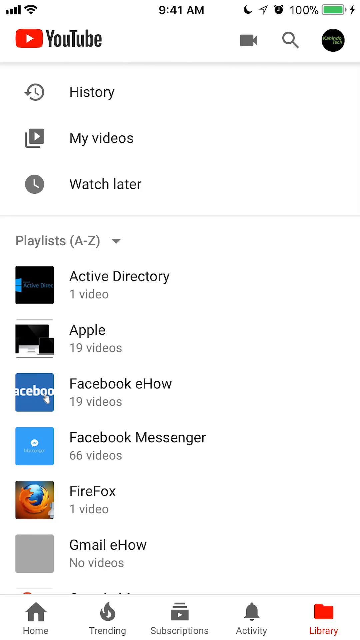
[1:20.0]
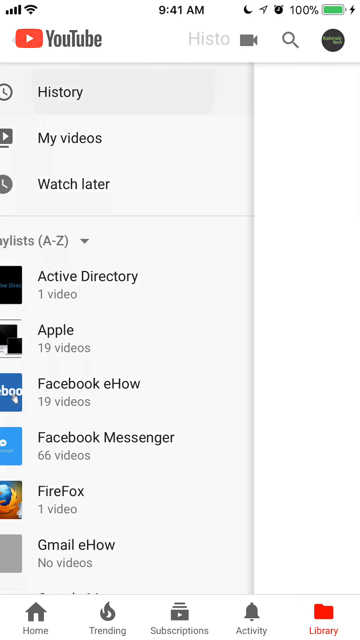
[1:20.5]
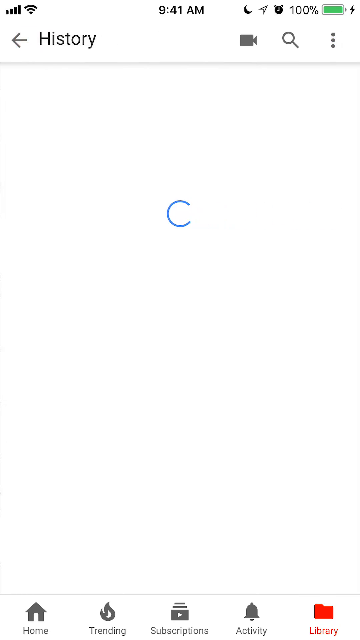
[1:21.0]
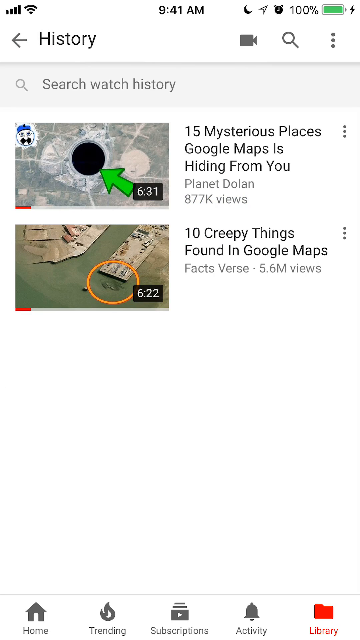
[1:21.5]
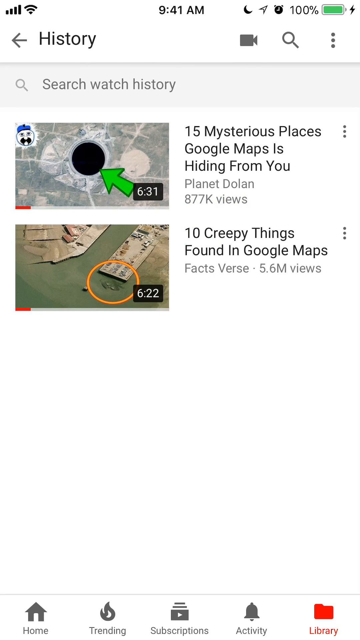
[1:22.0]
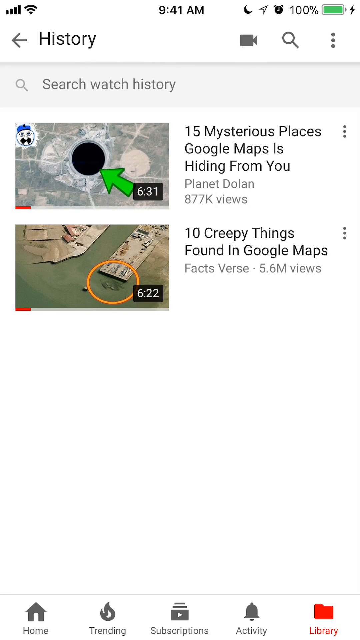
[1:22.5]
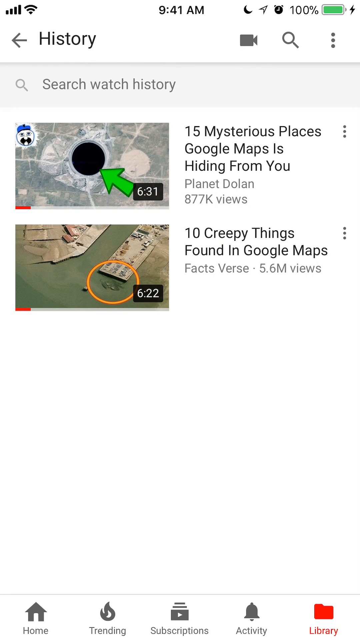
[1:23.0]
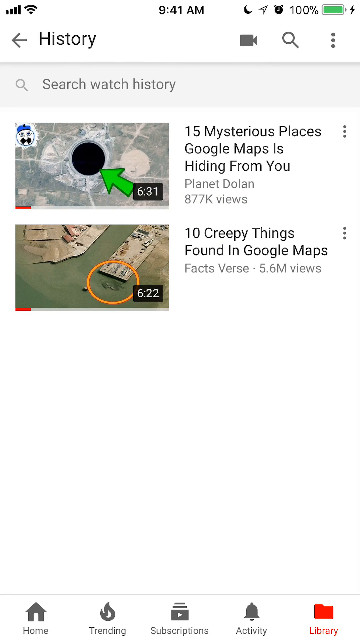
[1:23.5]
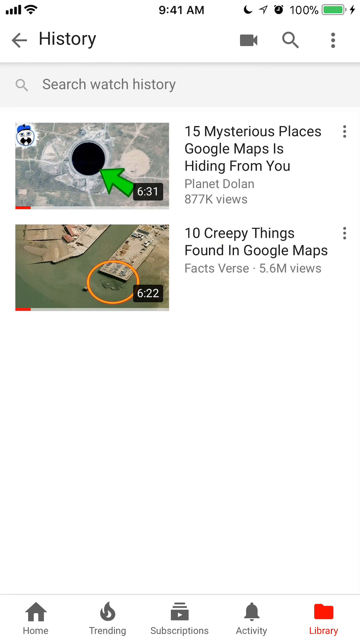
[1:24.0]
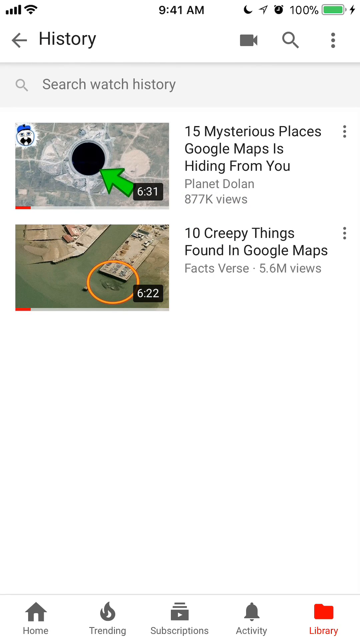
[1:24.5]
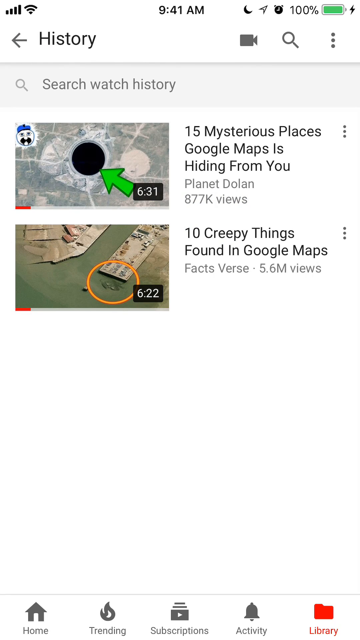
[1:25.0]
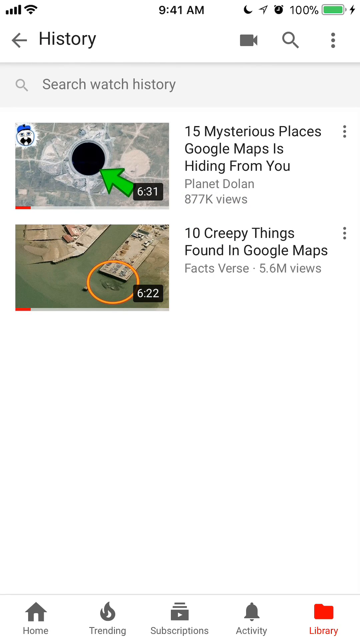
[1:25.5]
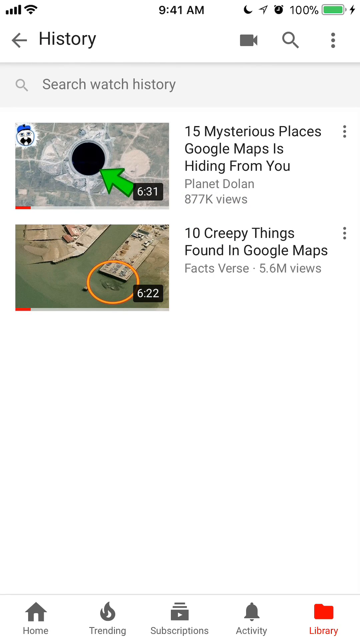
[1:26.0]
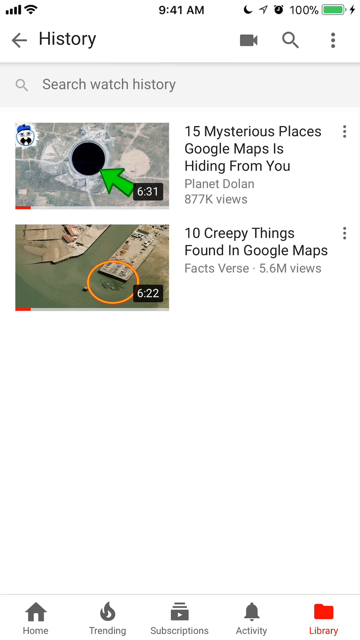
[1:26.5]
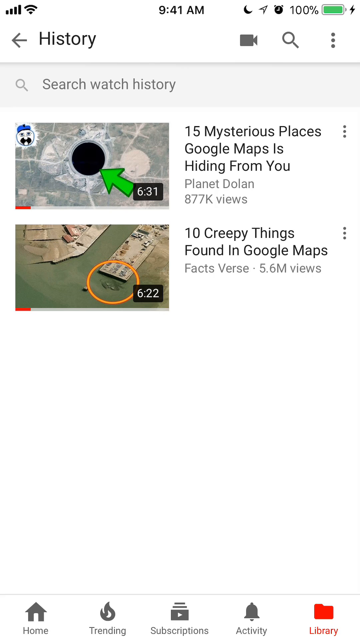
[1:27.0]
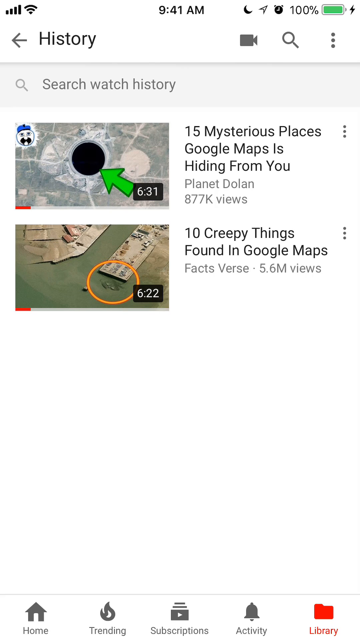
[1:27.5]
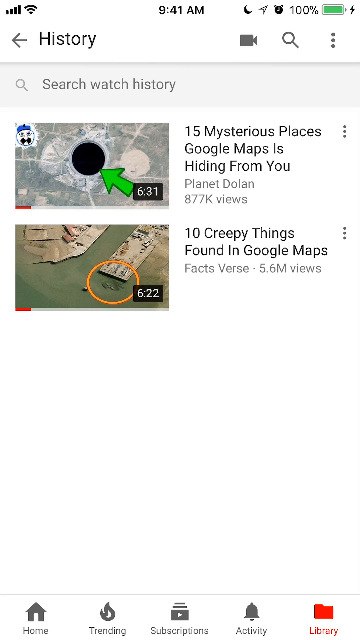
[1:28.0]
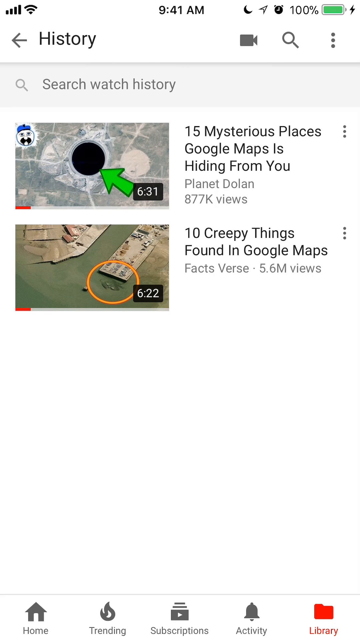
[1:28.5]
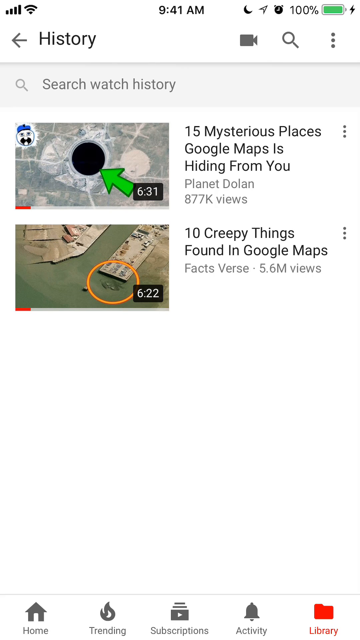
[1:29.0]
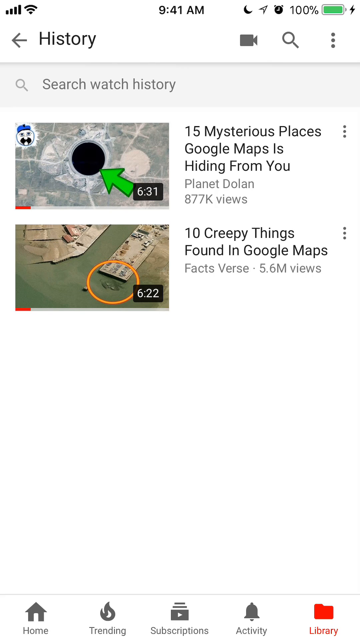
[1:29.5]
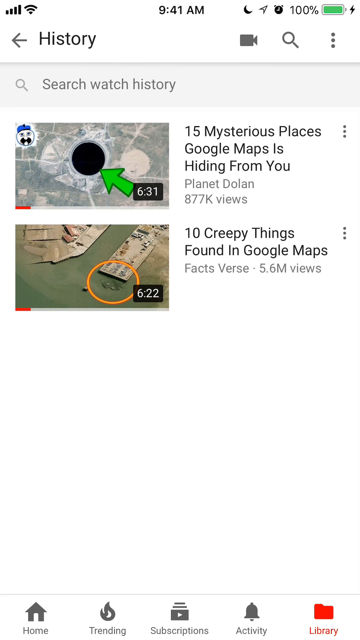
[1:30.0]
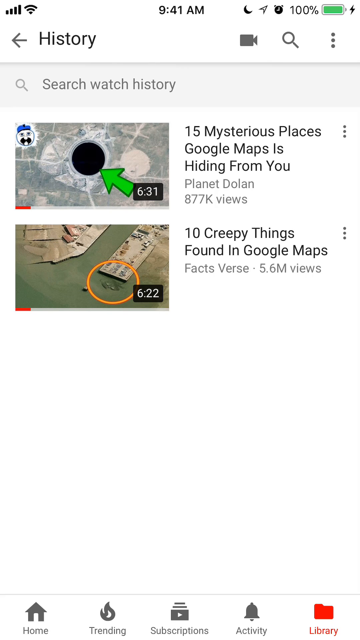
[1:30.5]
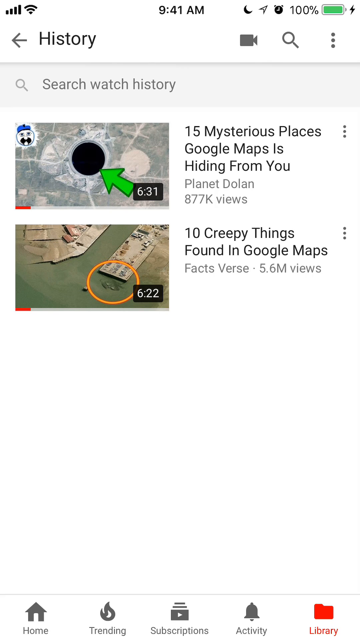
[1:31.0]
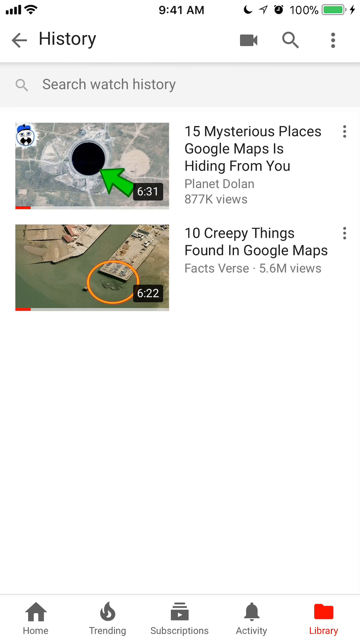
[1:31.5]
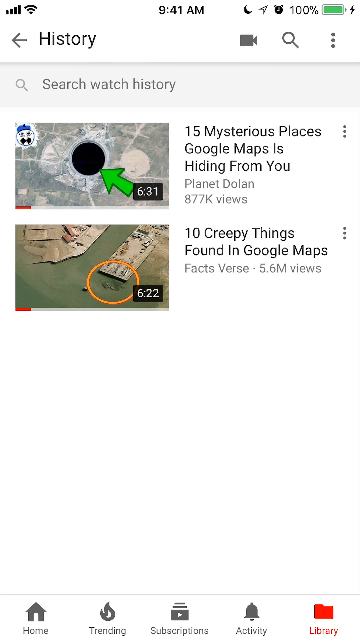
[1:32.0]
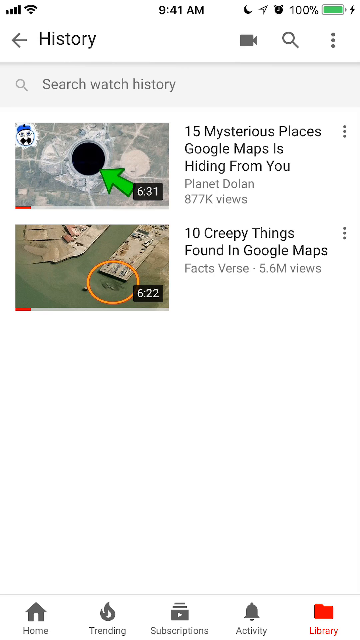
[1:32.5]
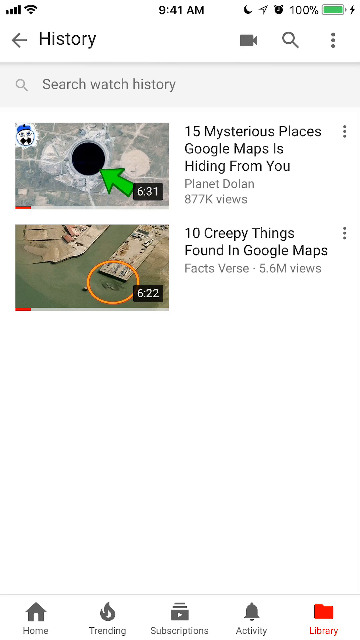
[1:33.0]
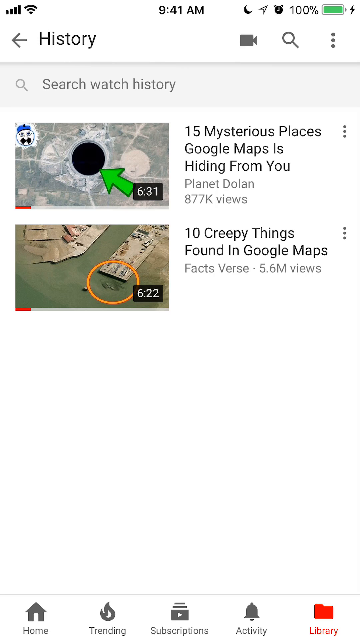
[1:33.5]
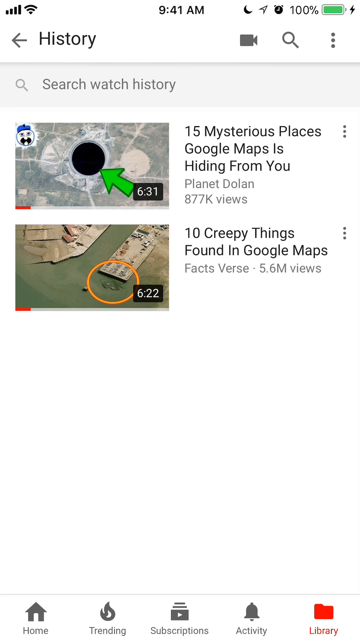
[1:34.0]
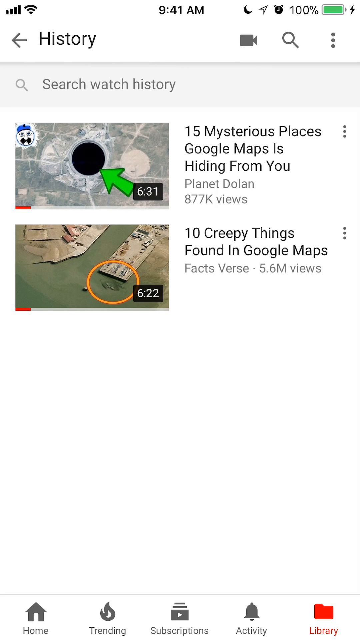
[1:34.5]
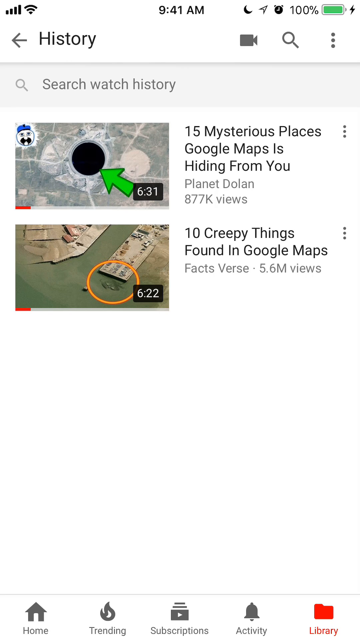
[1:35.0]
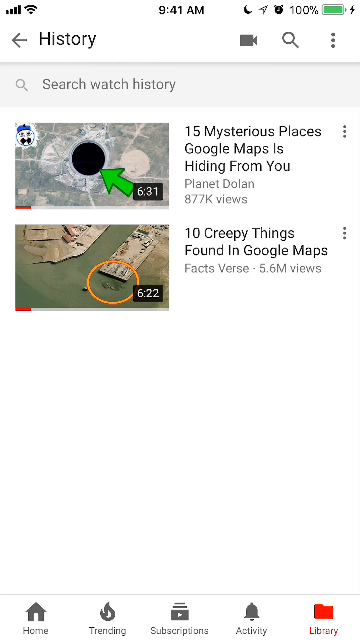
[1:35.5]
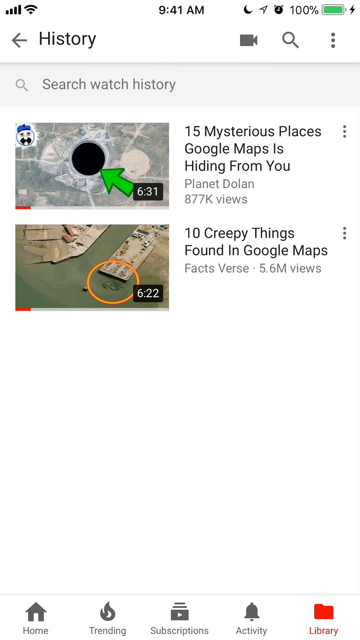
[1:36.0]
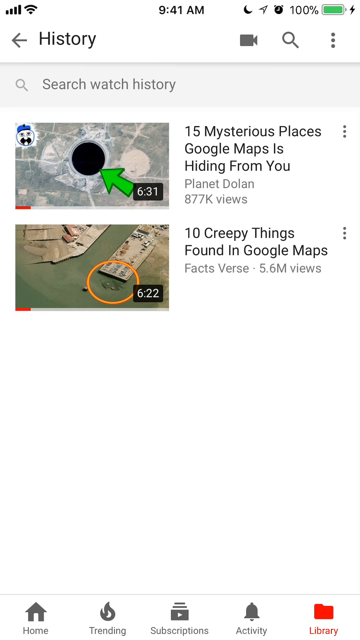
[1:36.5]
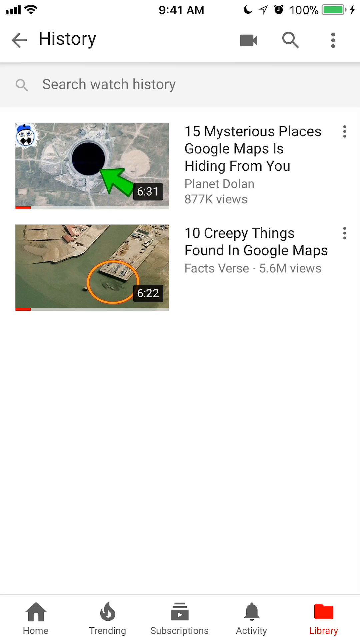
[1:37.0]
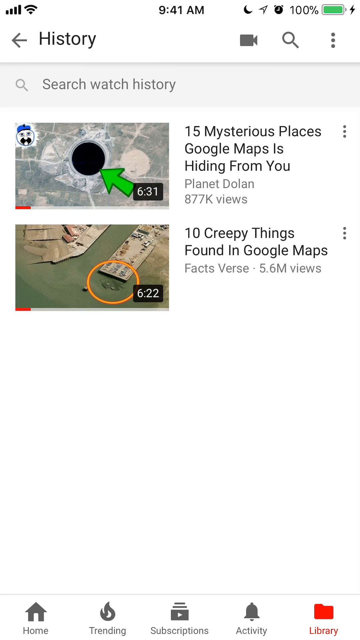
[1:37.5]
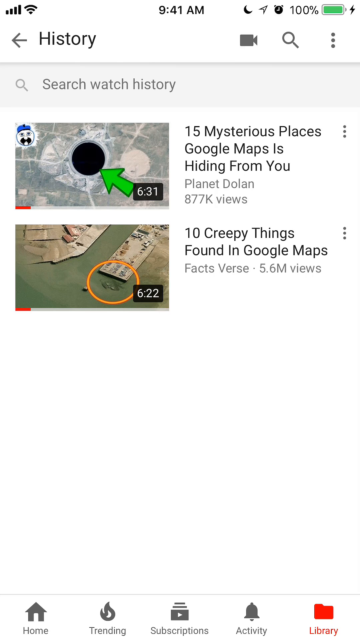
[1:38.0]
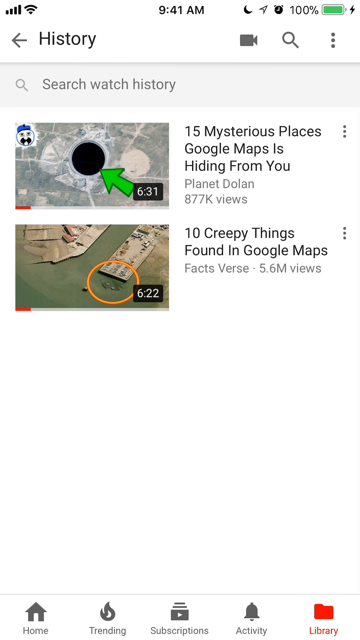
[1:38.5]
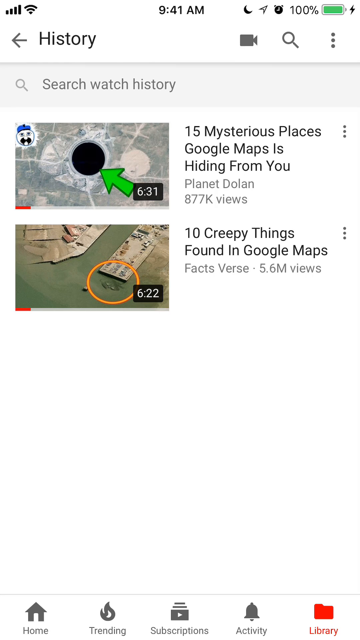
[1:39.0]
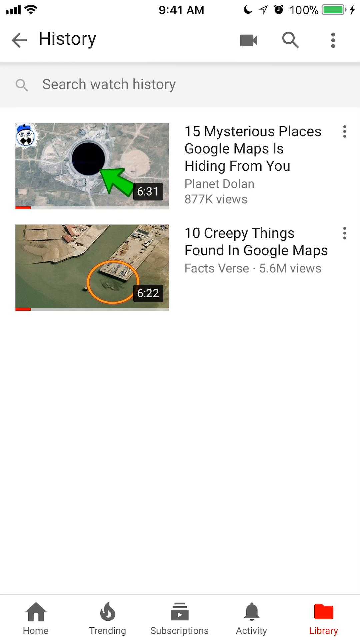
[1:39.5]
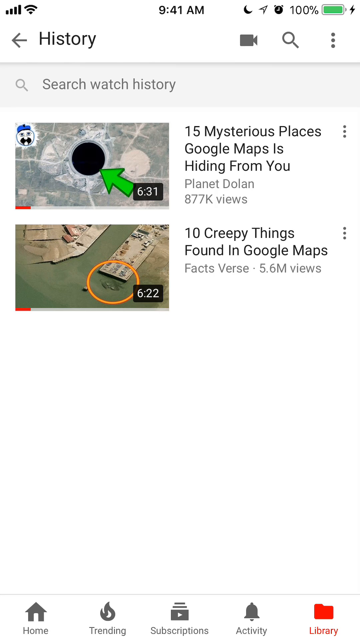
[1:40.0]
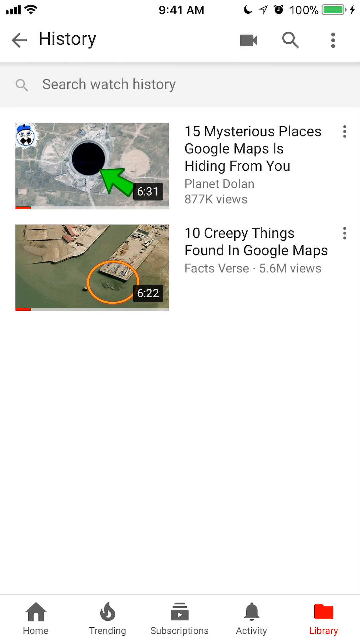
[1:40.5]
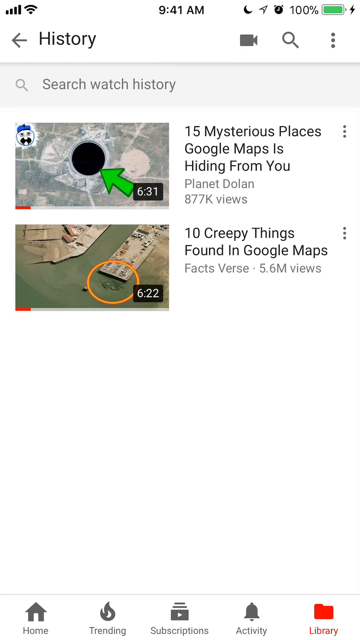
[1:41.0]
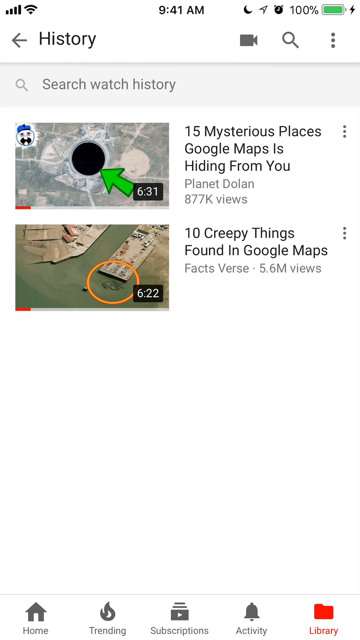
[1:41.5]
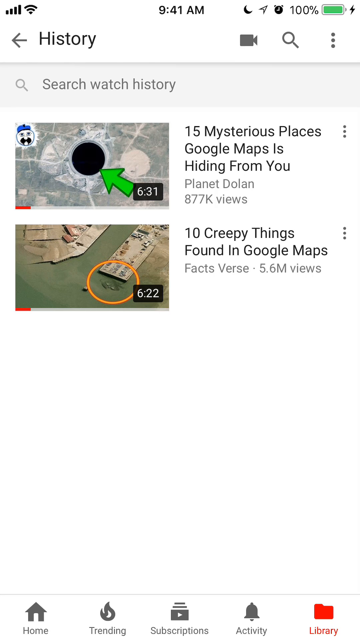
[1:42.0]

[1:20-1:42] The YouTube app is on the smartphone screen, with the YouTube logo in the upper left corner and a menu underneath it containing the History, My Videos and Watch Later buttons. Below that are the user's playlists with their video counts: Active Directory, one video; Apple, 19 videos; Facebook eHow, 19 videos; Facebook Messenger, 66 videos; Firefox, one video; and Gmail eHow, no videos. The view then transitions to another screen where somebody appears to have selected a playlist with two videos in it. The first is titled "15 Mysterious Places Google Maps Is Hiding From You" and is 6 minutes 31 seconds long; the second is titled "10 Creepy Things Found In Google Maps" and is 6 minutes 22 seconds long.